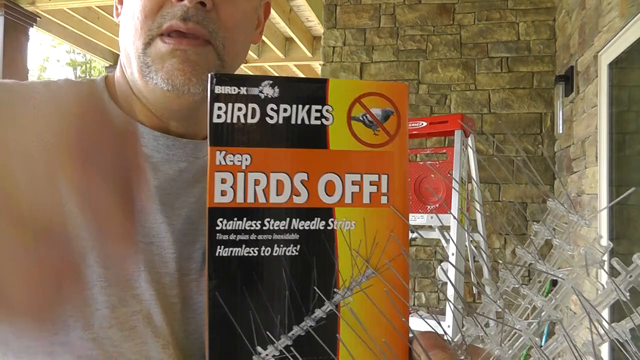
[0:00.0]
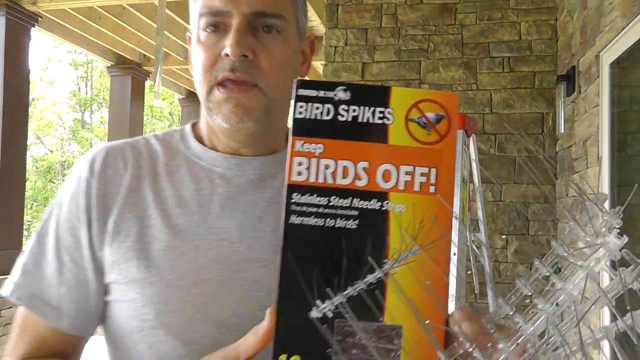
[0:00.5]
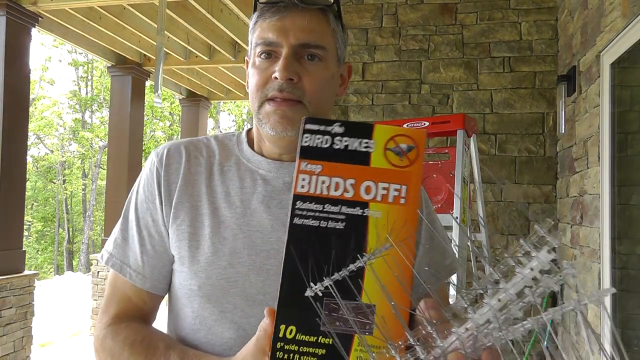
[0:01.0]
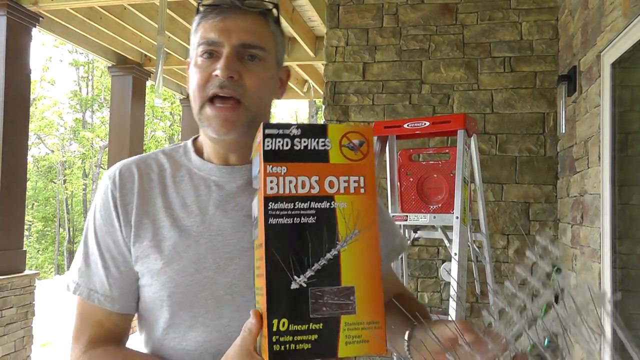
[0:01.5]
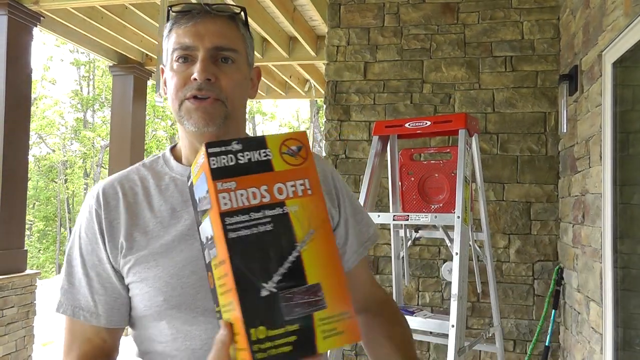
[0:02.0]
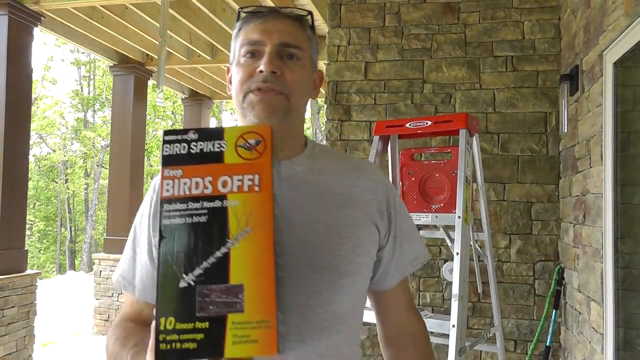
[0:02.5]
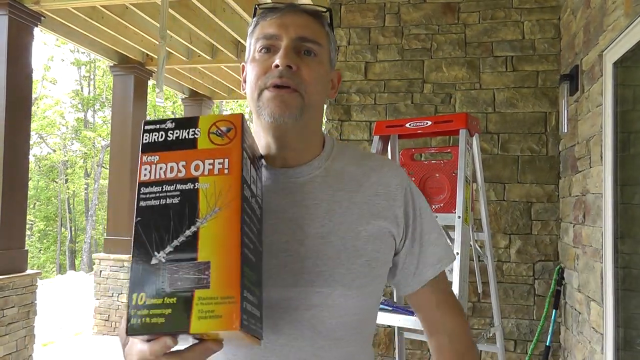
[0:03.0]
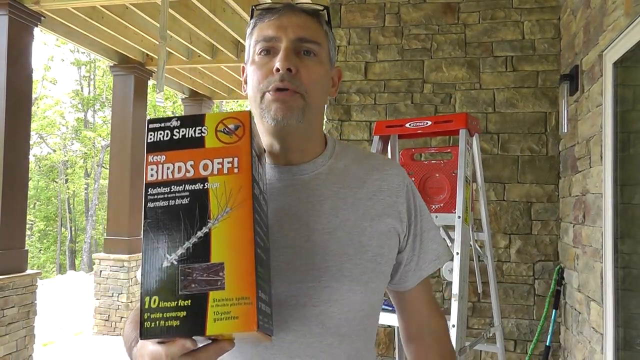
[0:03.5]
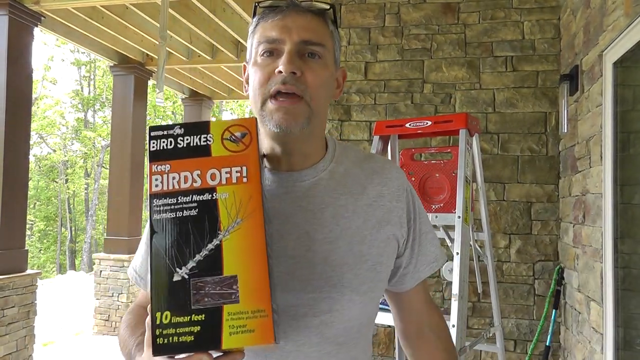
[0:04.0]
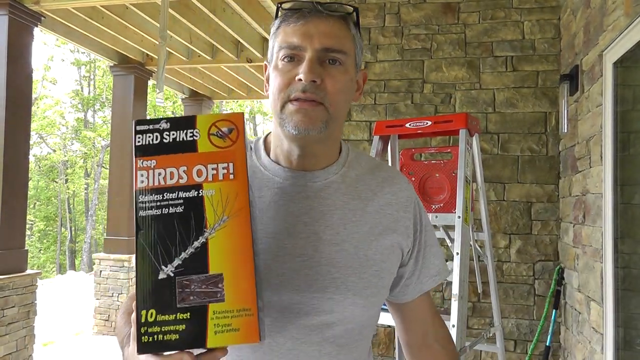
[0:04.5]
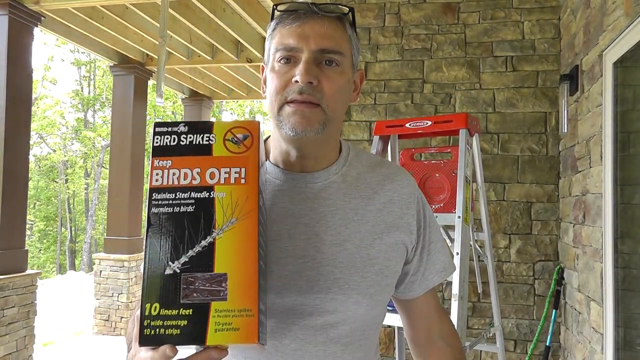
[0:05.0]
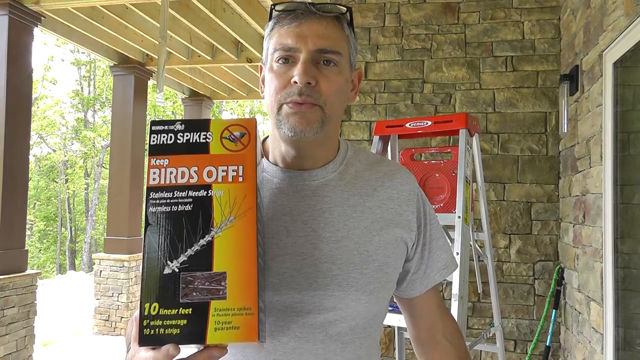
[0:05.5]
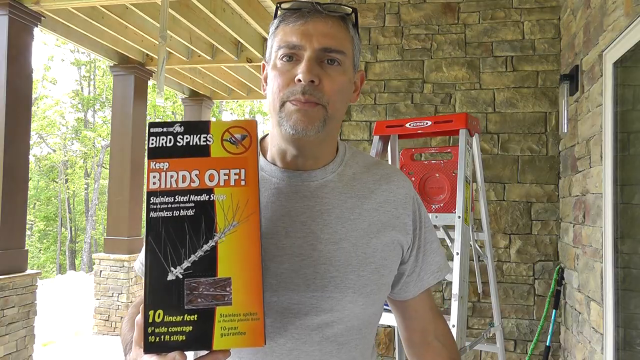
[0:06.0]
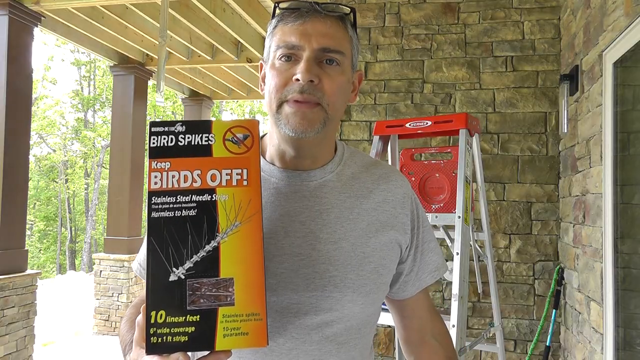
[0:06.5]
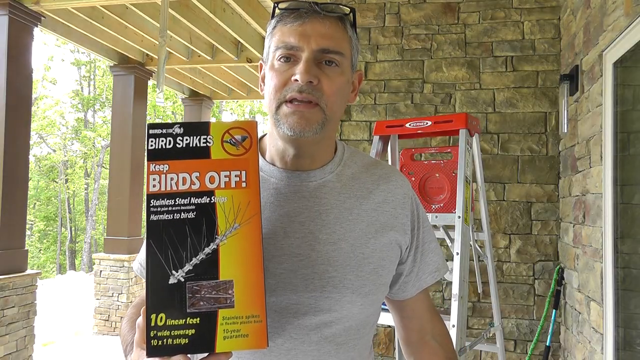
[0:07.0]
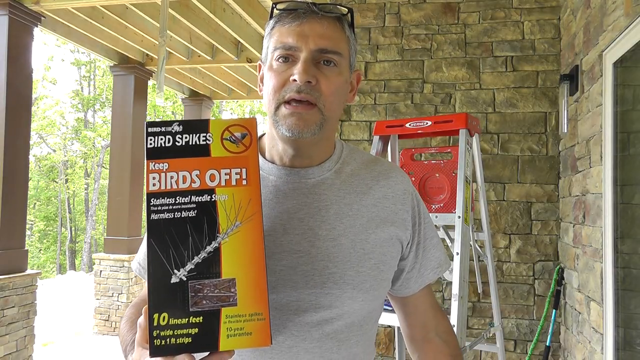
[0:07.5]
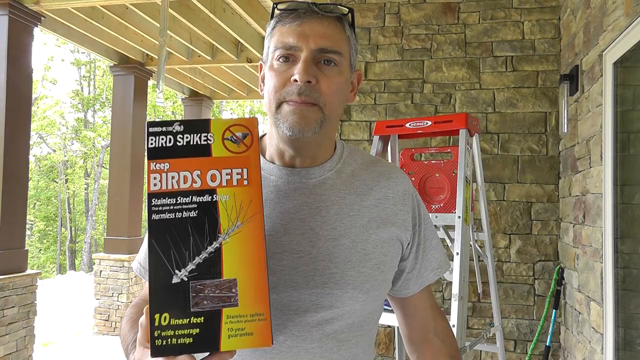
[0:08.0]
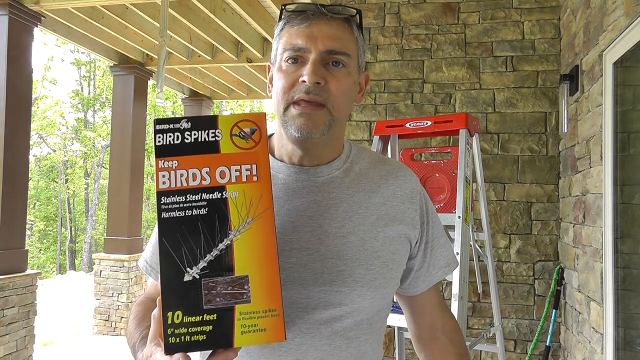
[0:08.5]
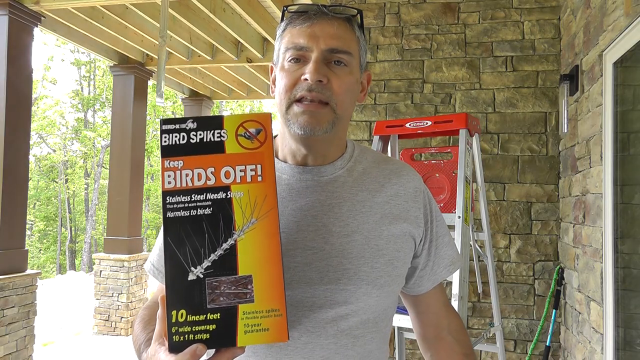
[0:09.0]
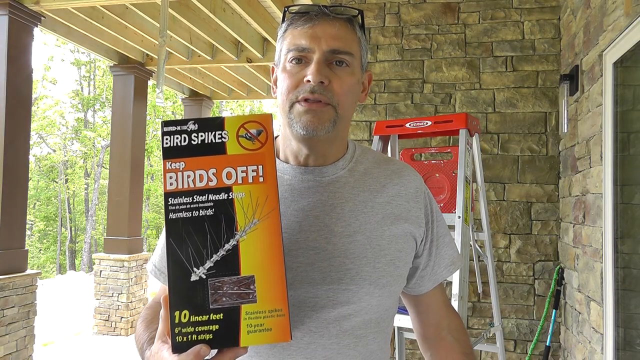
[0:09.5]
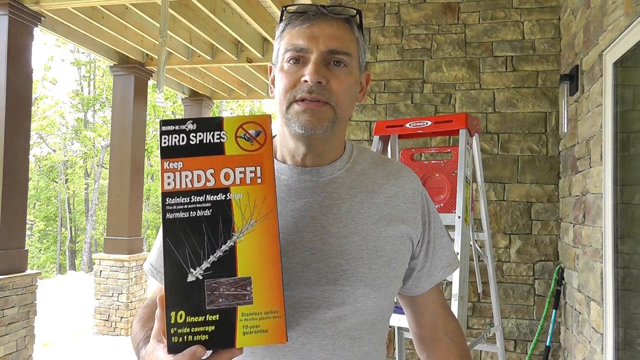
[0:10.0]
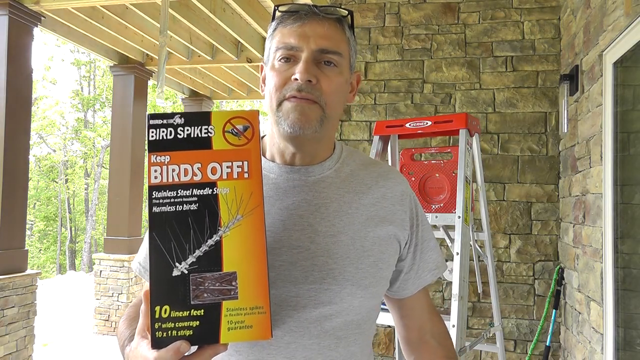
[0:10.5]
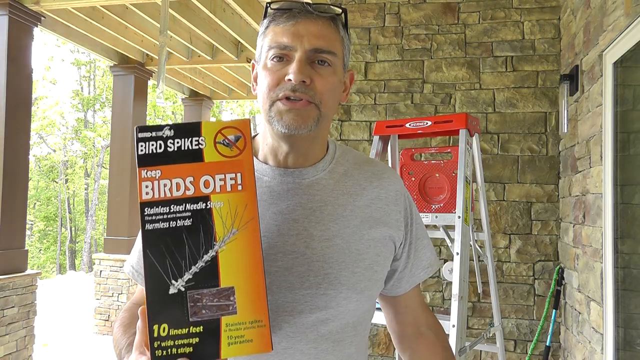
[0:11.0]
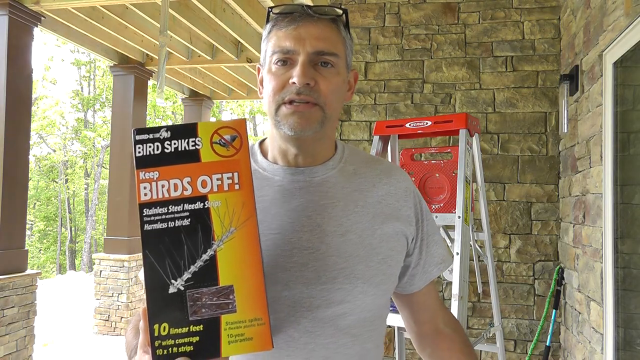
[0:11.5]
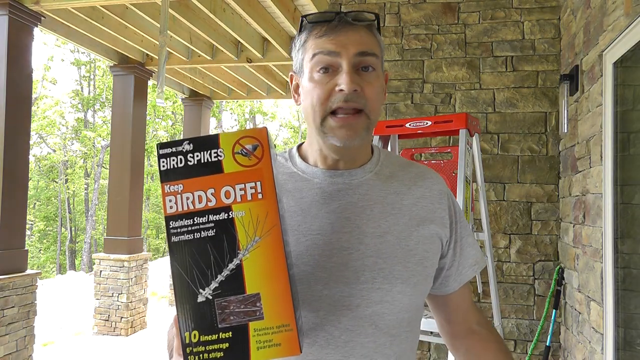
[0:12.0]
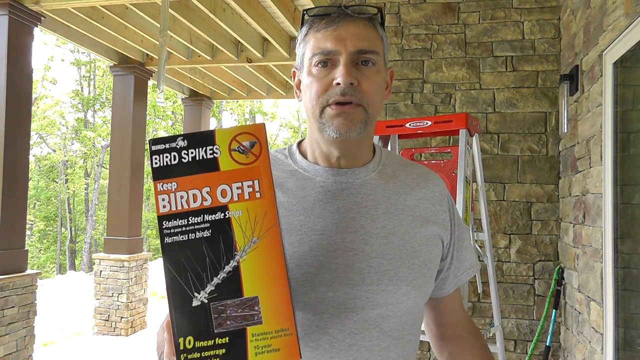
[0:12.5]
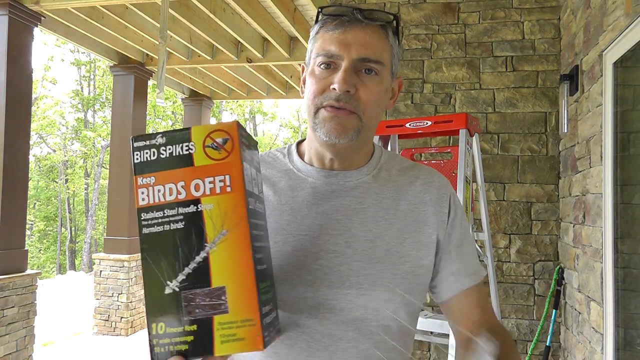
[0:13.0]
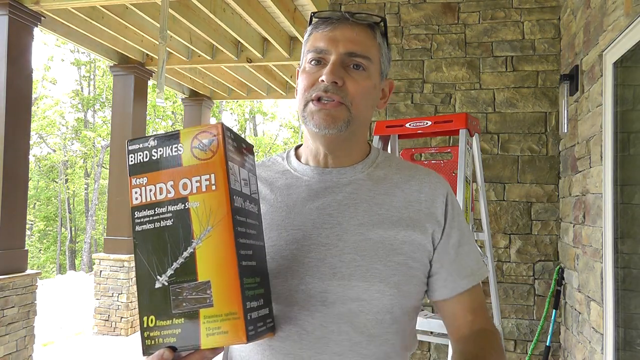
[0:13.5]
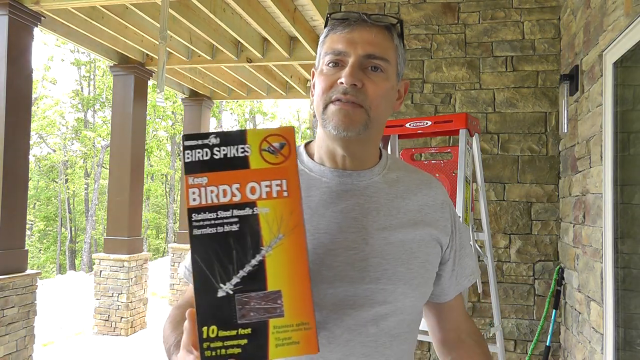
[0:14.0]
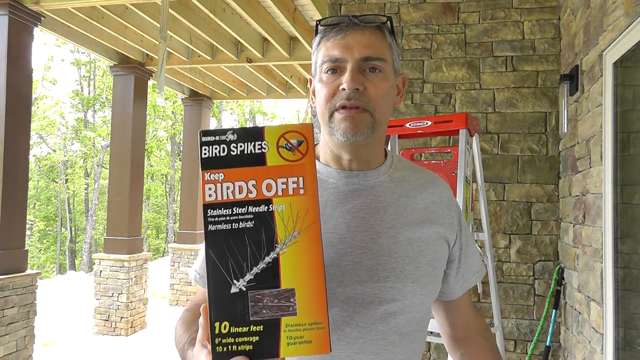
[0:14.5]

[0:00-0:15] The video is titled Harmless Way to Stop Birds from Building Nests Next to Your House. It opens with a white man in his mid-forties wearing a white t-shirt, with gray hair and eyeglasses perched on top of his gray hair. In his right hand, held up against his chest, is a black and yellow box that says "Keep birds off!", and in his left hand he has some metal pieces. He is standing on his front porch in front of his home, with an aluminum ladder and a stone wall behind him and part of a door visible on his right side. A deck is built out over the top of his head. He is giving an introduction to the product in his hand, called Birds Off.